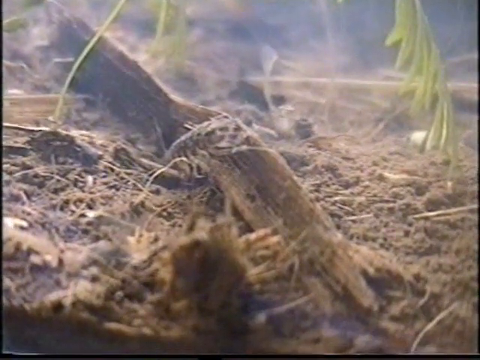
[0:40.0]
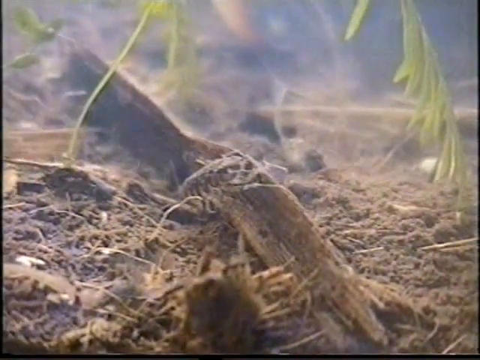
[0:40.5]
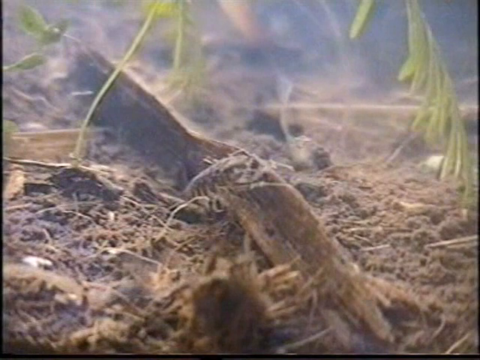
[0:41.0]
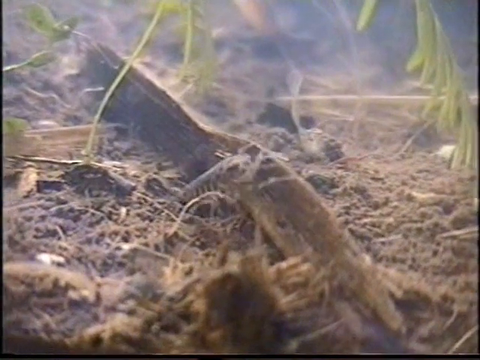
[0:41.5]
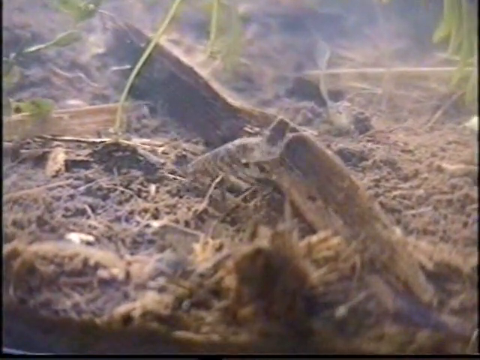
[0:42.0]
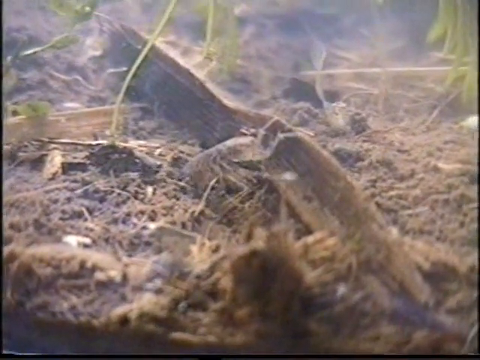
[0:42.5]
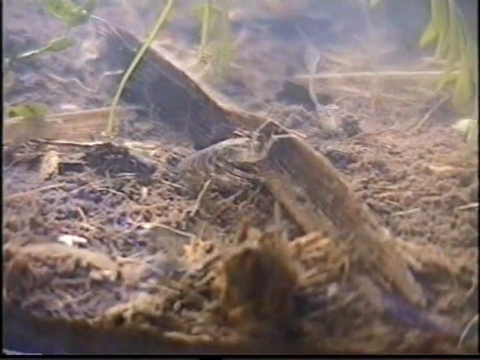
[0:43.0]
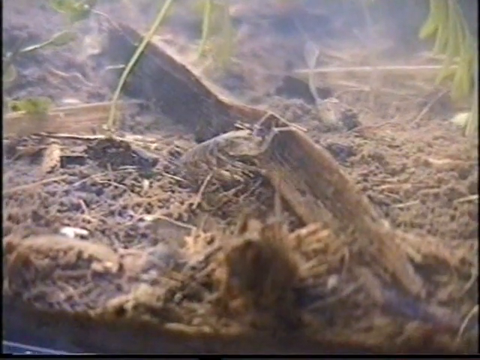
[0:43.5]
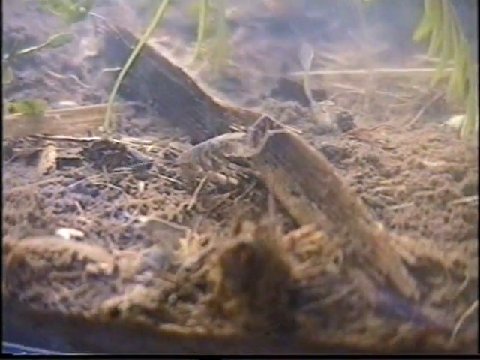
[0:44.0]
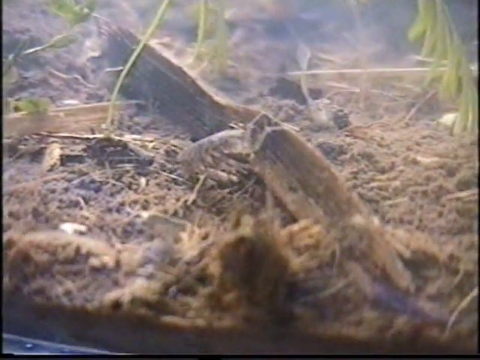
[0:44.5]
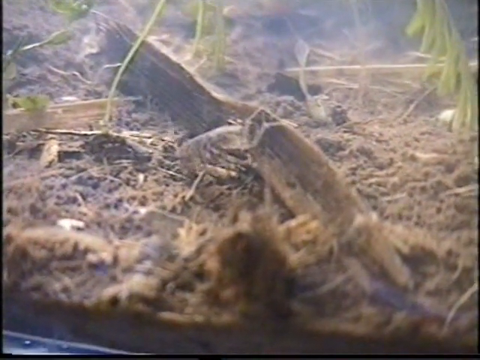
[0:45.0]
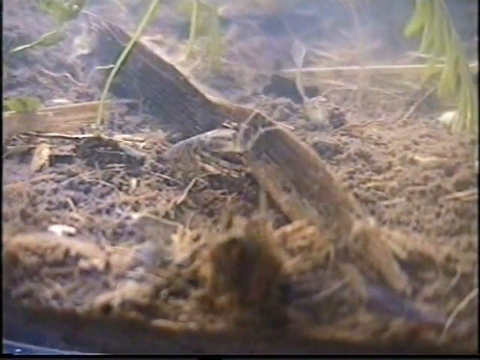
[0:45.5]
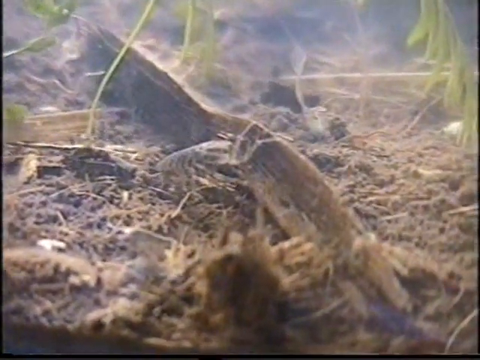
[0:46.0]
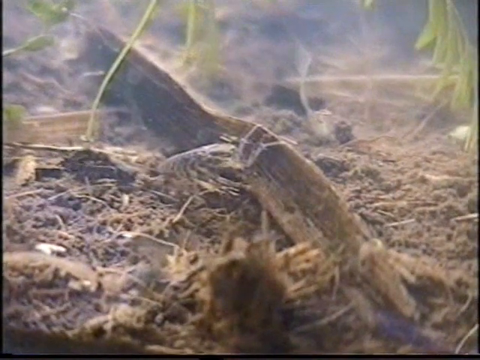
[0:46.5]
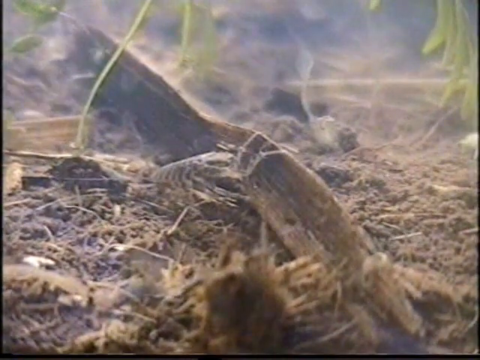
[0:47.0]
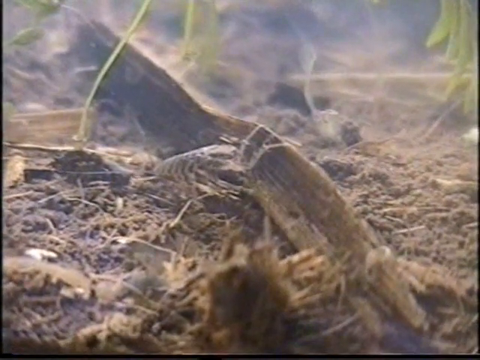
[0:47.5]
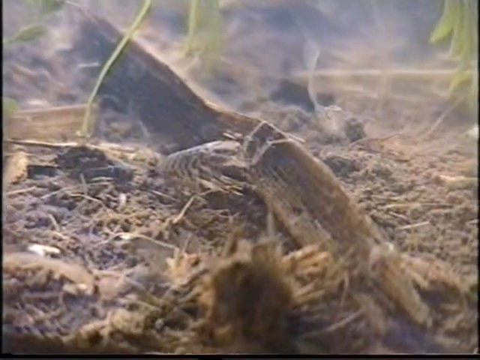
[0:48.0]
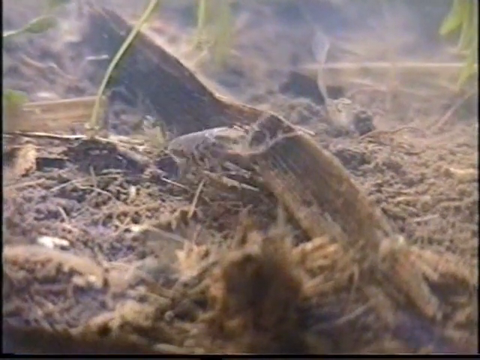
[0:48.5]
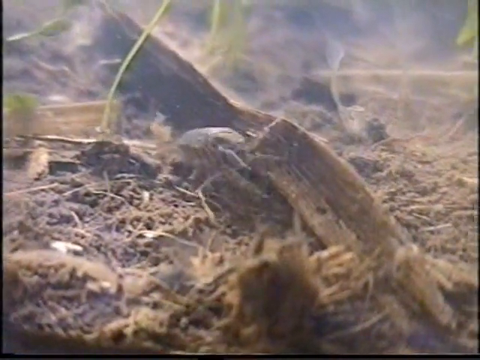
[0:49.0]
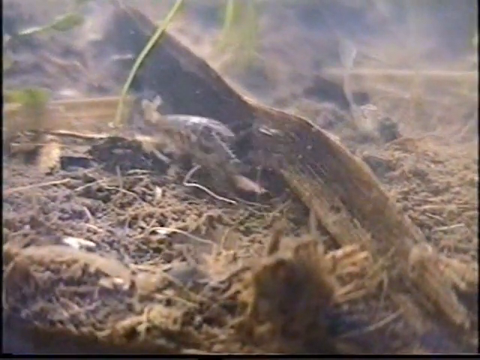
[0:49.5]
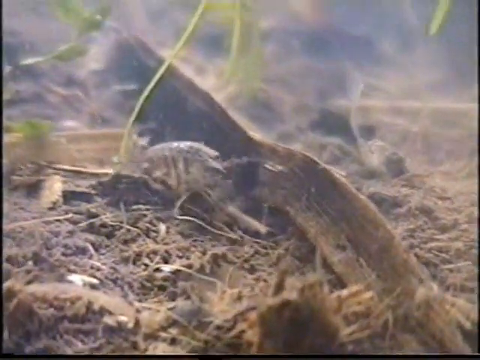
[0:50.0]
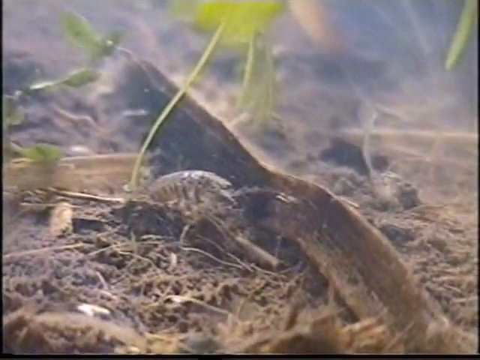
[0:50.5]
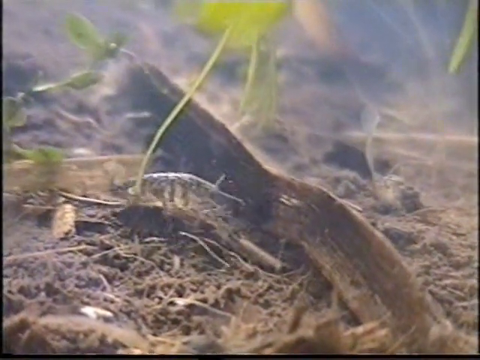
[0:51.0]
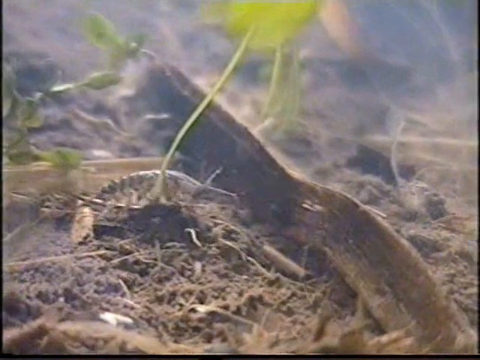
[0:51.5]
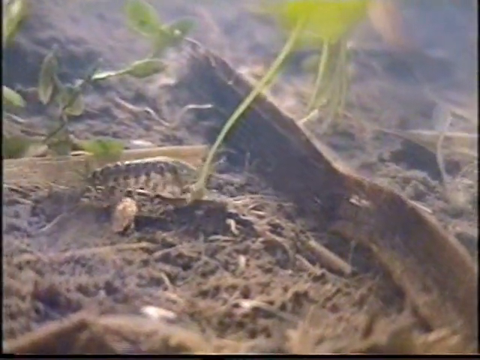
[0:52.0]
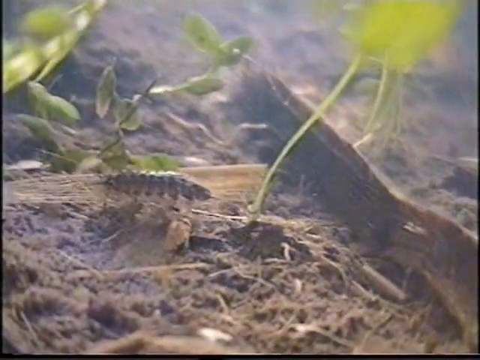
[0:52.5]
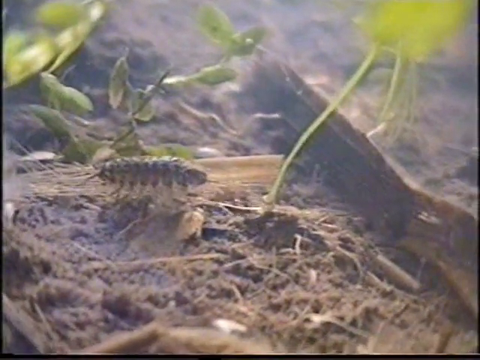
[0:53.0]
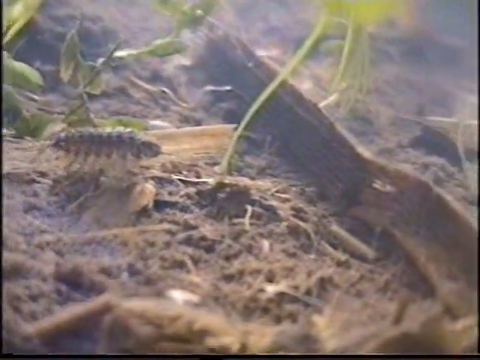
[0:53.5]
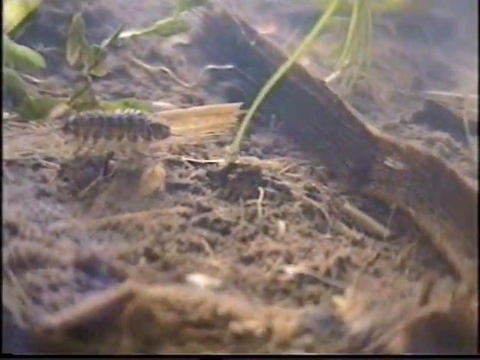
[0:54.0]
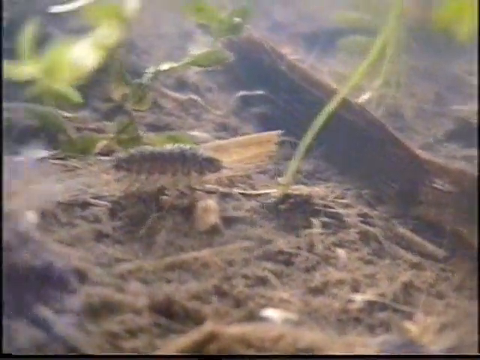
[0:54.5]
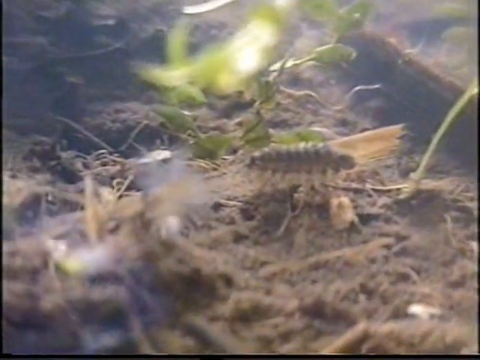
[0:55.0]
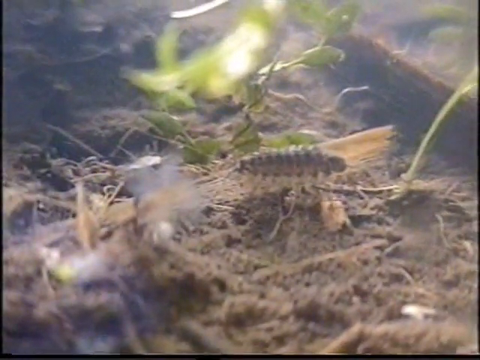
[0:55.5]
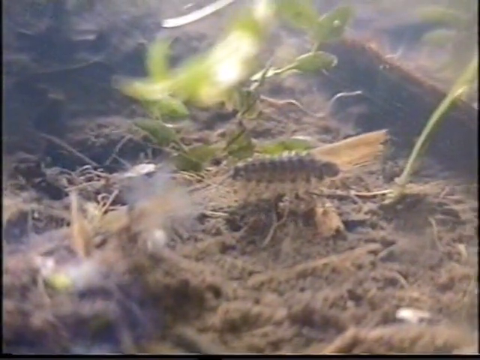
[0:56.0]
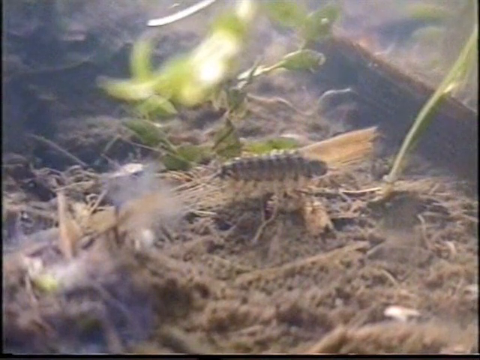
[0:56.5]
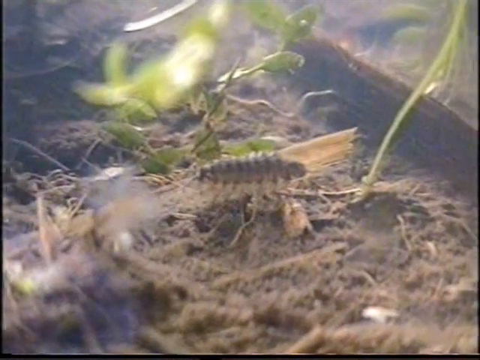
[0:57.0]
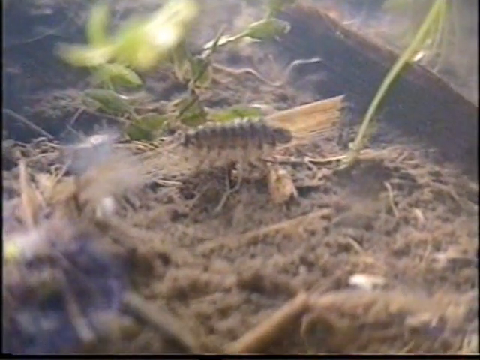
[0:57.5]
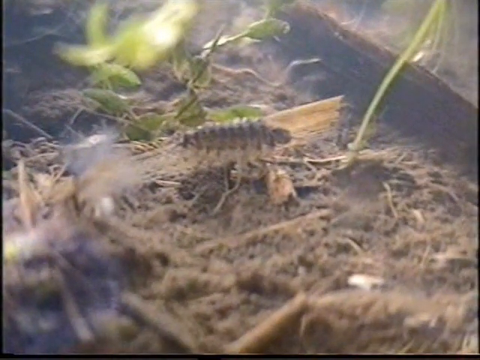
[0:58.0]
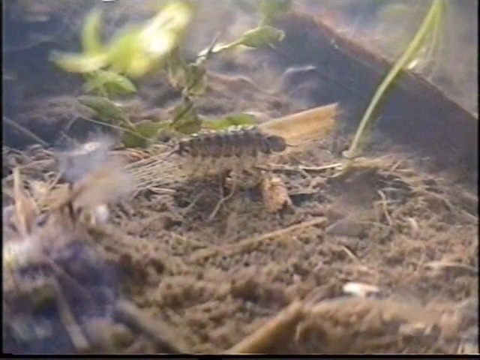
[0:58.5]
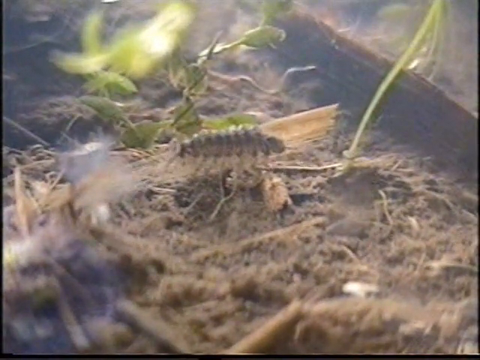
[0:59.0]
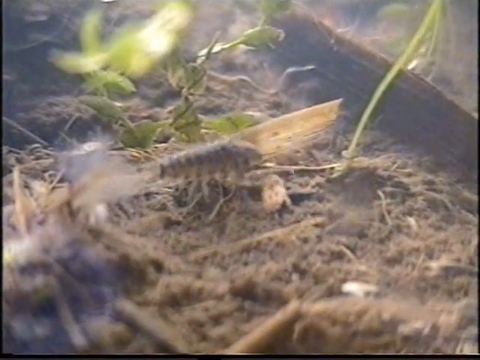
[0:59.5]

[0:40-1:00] The insect pauses for a little bit and seems to be possibly eating something on the ground. It goes over every little twig at the bottom of the aquarium, then stops and looks like it is searching or exploring the bottom of the container. A little more dirt is at the bottom, along with different types of greenery, including little green circular leaves on the ground, and patches of dirt. The bug looks very comfortable in this environment. It is a light brown color and looks like it has beige lines between the scaling of its shell.